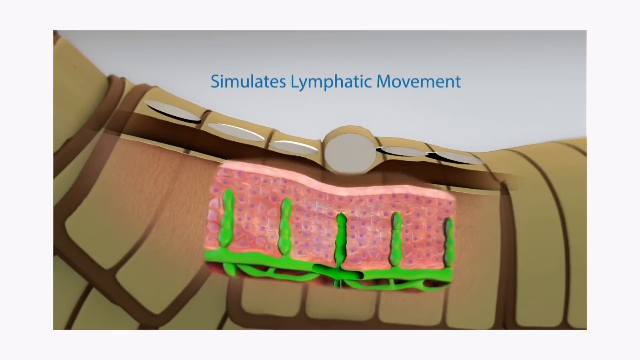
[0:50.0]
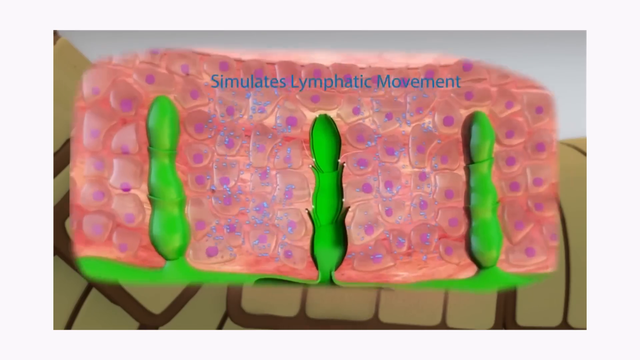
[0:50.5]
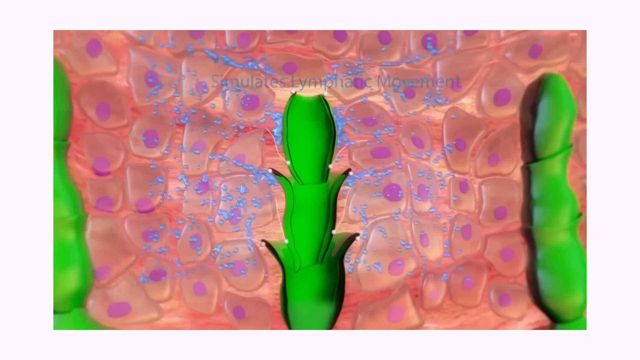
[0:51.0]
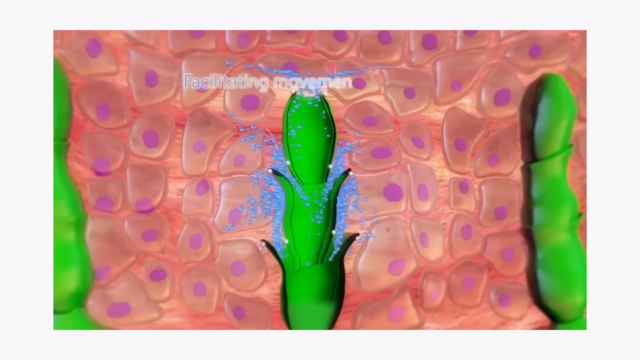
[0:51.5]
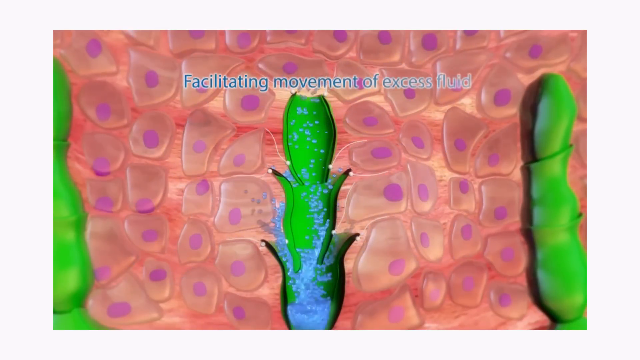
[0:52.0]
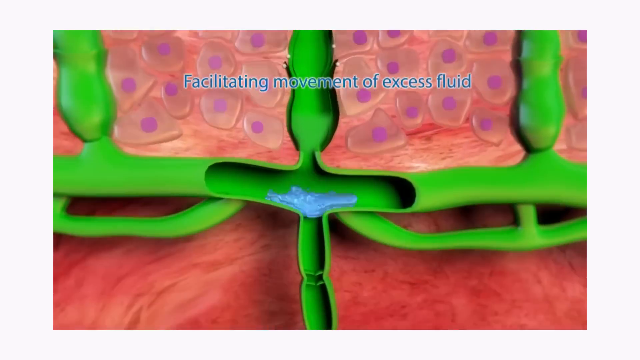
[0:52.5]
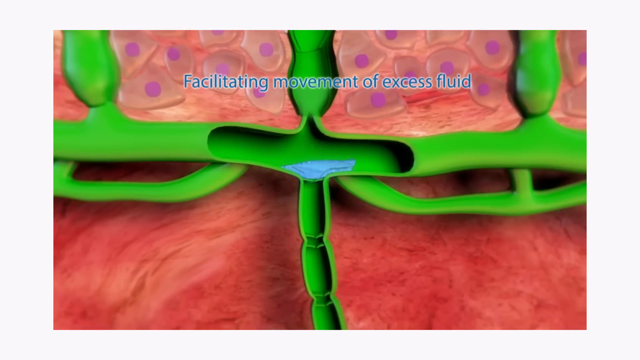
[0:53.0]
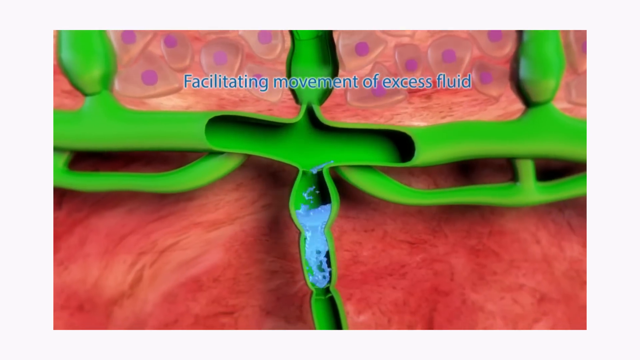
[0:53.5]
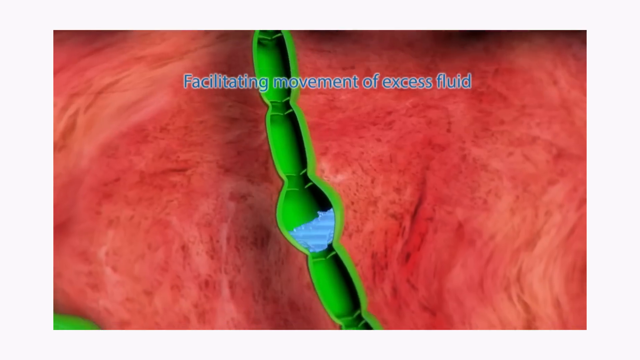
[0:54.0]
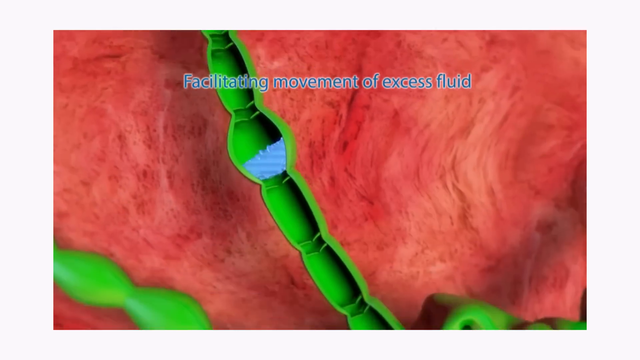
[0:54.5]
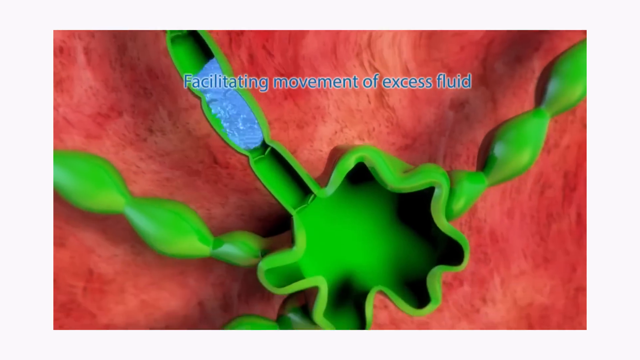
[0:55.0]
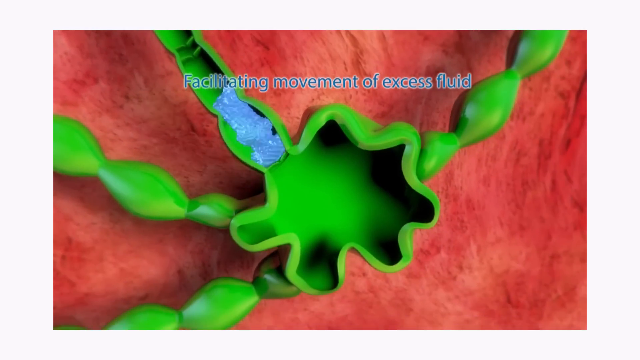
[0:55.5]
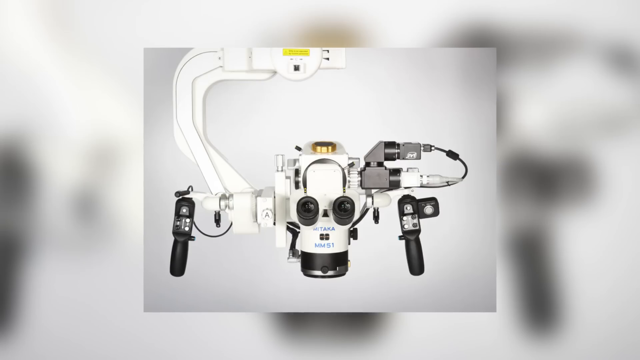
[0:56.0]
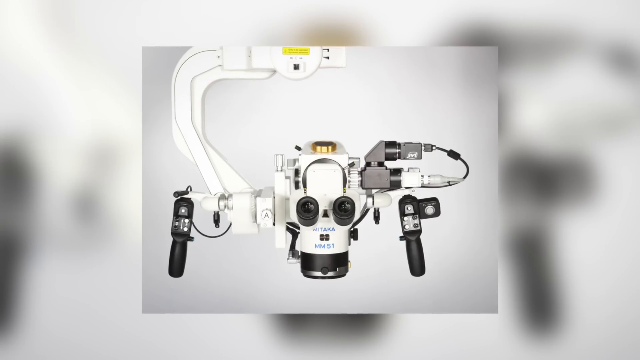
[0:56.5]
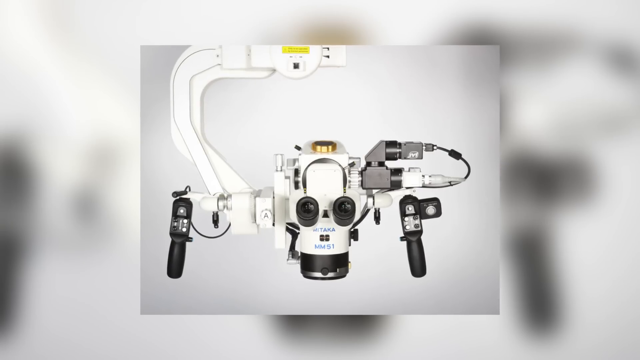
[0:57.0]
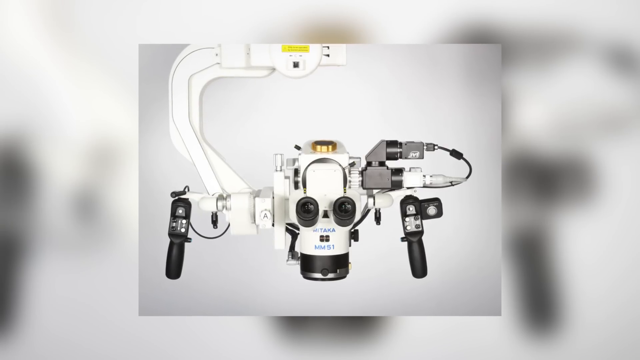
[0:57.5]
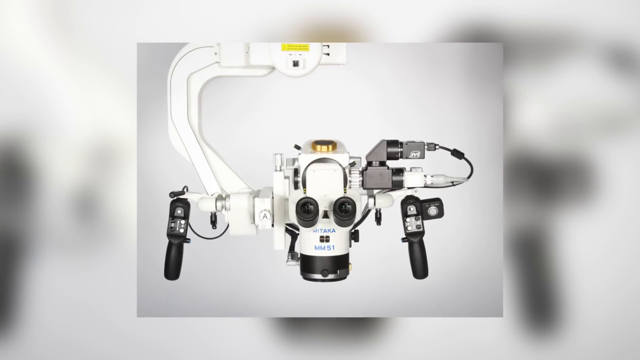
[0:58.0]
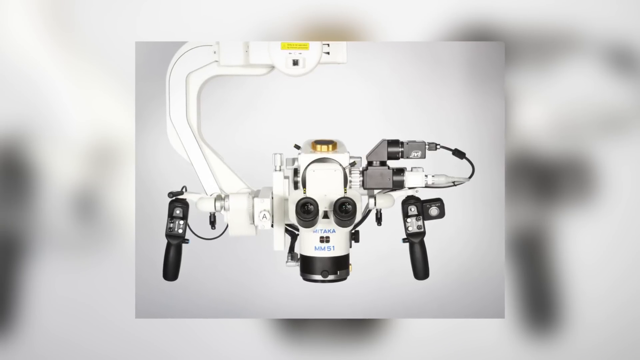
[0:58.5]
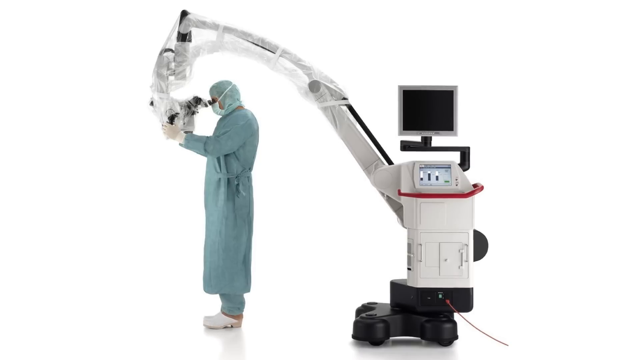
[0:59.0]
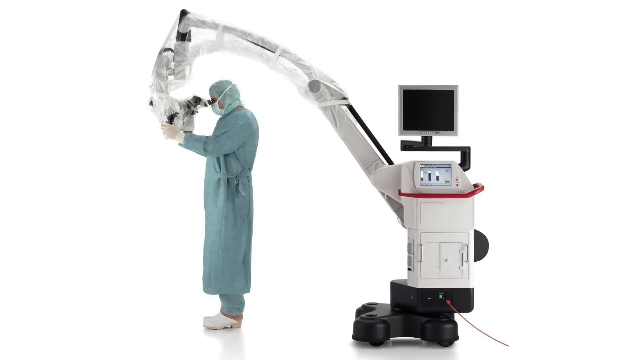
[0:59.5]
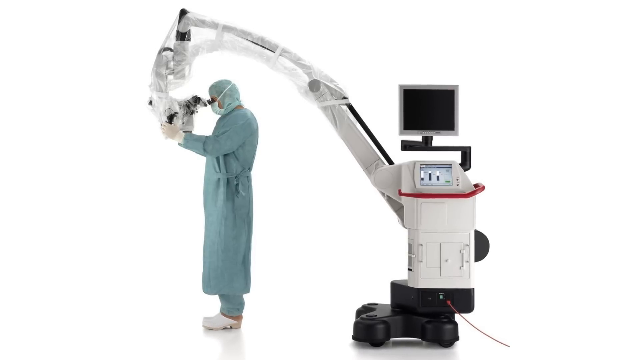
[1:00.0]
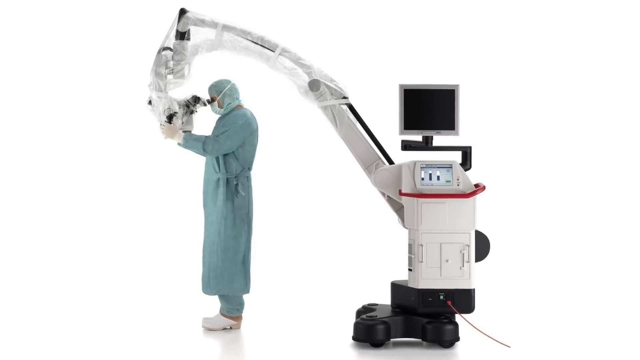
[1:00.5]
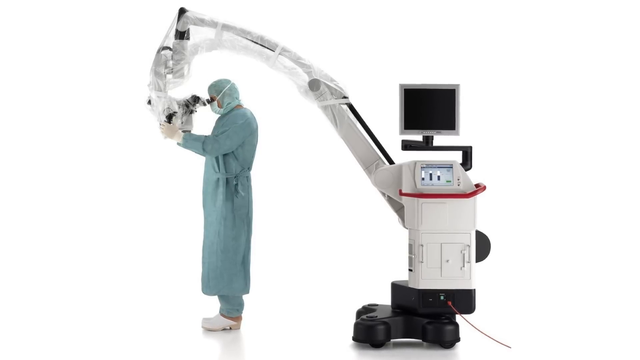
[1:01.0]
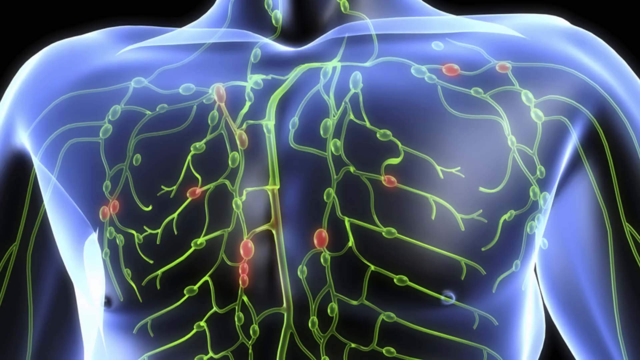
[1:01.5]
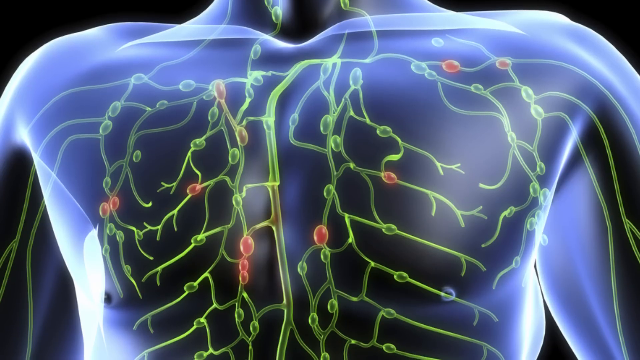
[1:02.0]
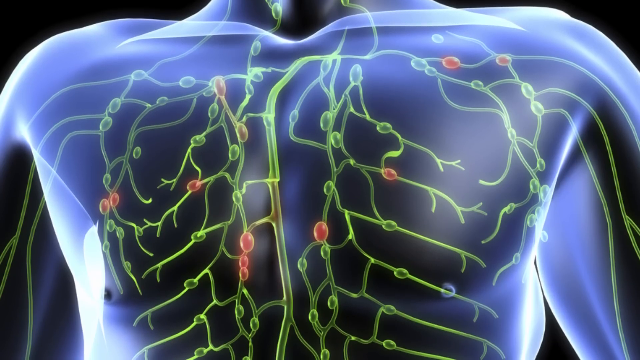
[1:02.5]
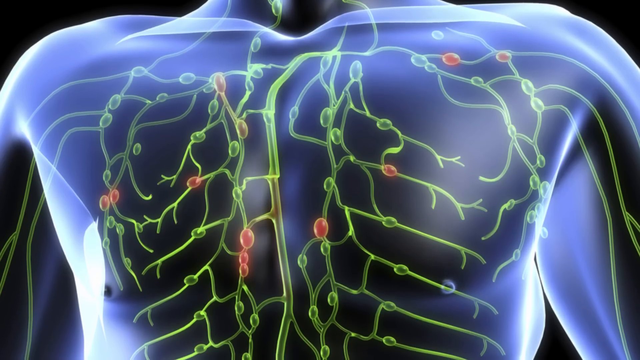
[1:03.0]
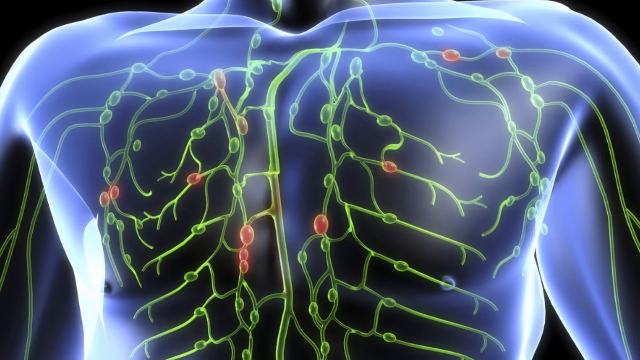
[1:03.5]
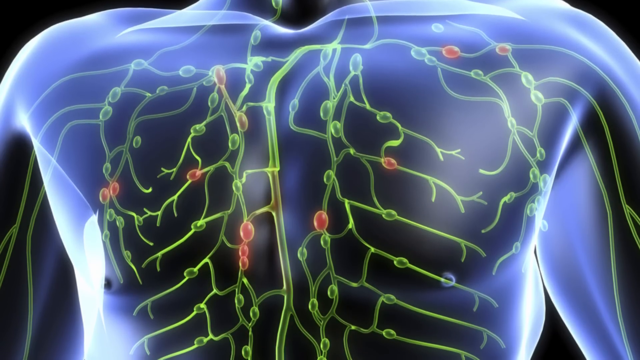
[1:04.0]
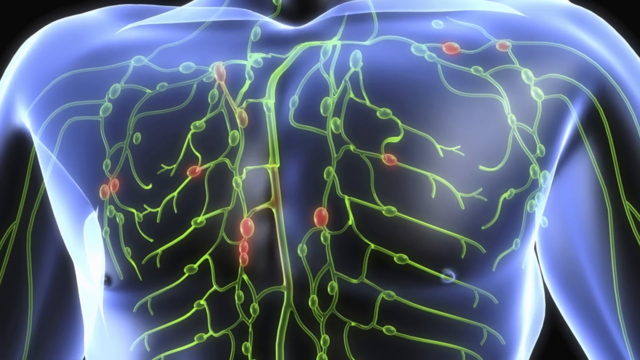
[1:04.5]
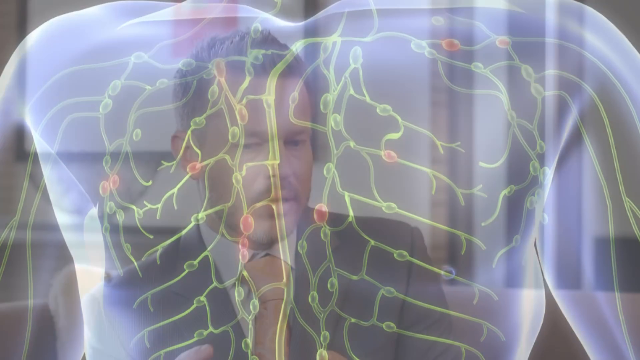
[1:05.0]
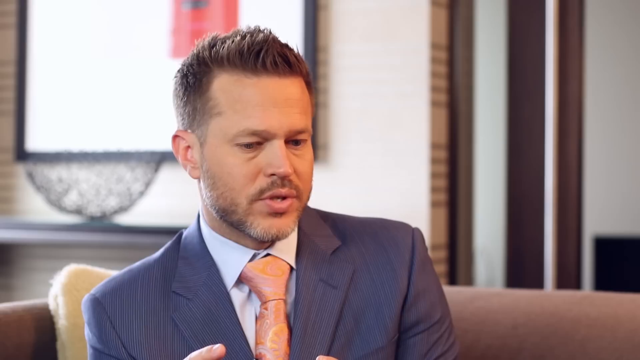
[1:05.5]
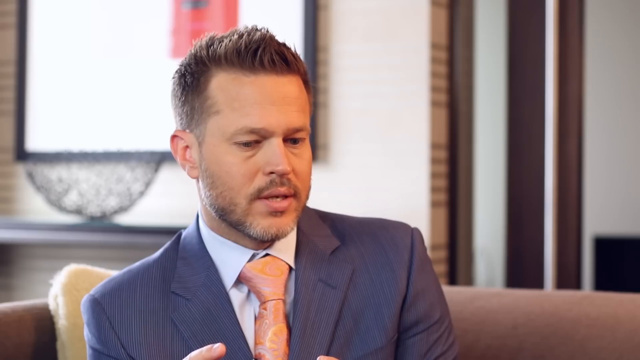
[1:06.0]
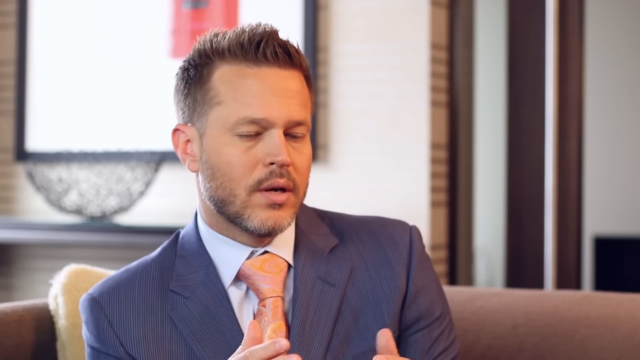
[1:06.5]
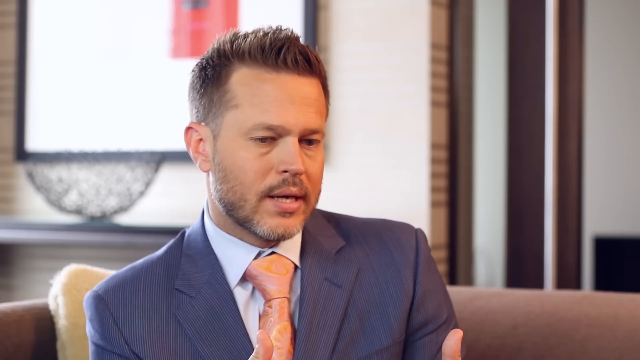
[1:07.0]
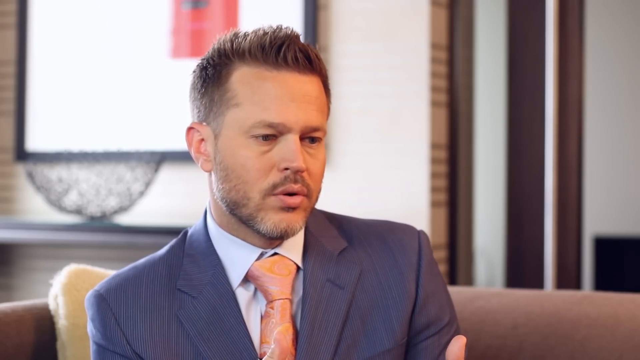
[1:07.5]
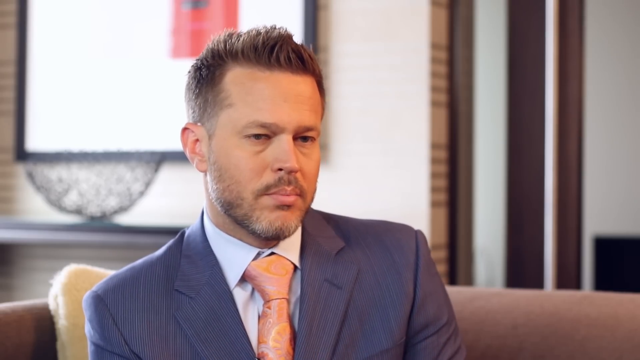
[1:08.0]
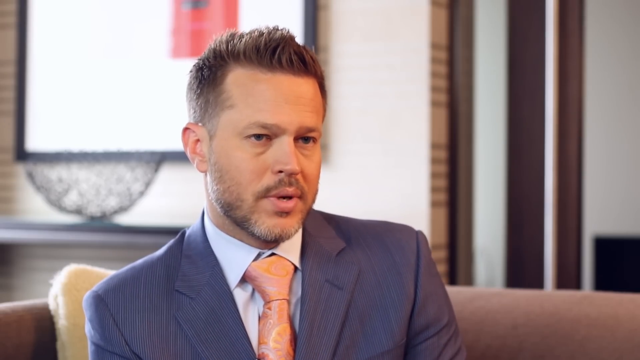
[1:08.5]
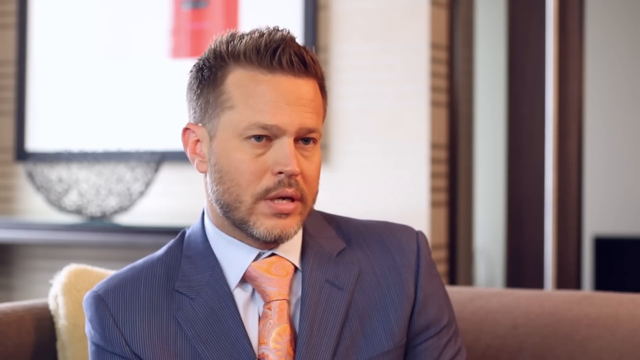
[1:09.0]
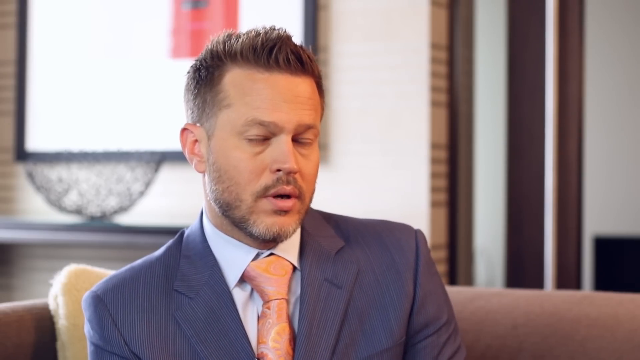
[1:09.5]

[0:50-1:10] A gray background has blue text in the upper center reading "simulates lymphatic movement." Beneath it is a tan illustration of tissue with a section cut out to show what lies underneath the dermal layers. The view moves toward the viewer and shows individual cells at a cellular level, pink with little purple dots in their centers, along with green tendrils extending outward that look like they could be the lymphatic drainage system. A cross-section of the green tubing is cut open so its inside is visible. Black text above reads "facilitating movement of excess fluid," and fluid in the tubing runs left to right, draining downward into a sectioned vertical tube so that it moves in increments down to a central area that looks like a tiny reservoir. The video then changes to an image of medical equipment that looks like a heavy-duty microscope, primarily white with black handles, black dials and black lenses.